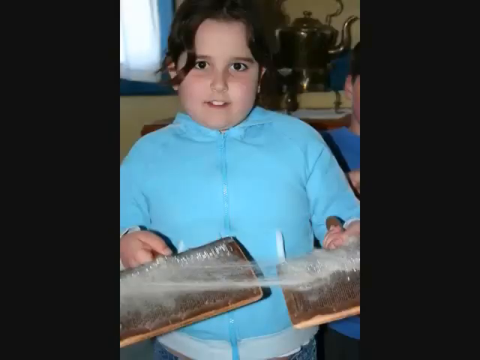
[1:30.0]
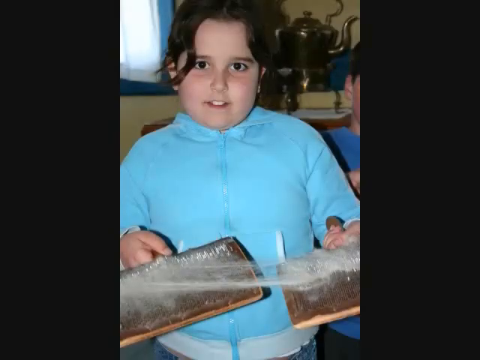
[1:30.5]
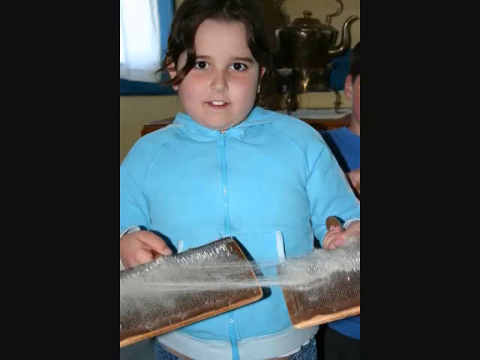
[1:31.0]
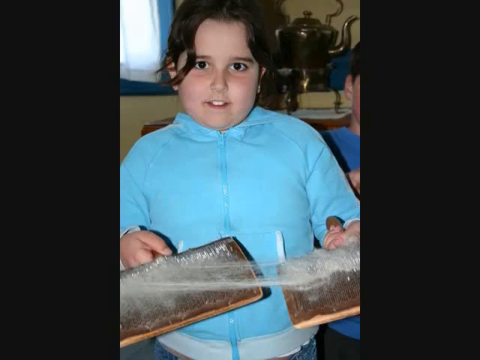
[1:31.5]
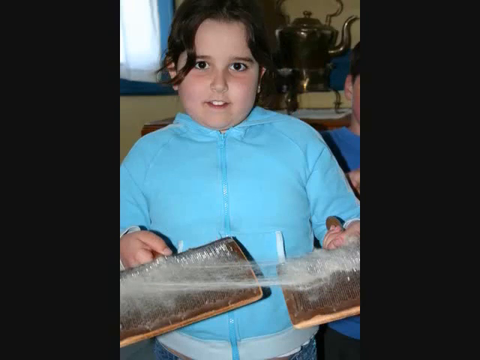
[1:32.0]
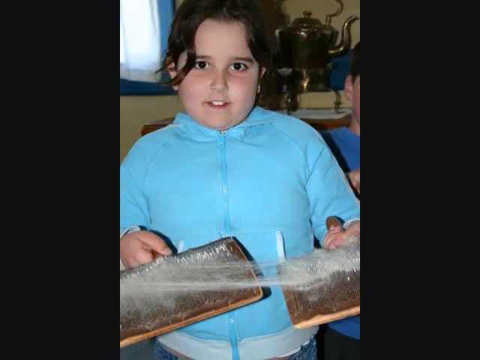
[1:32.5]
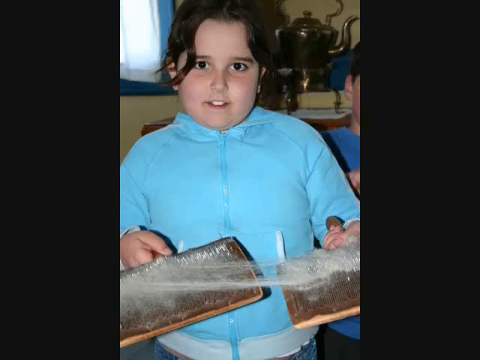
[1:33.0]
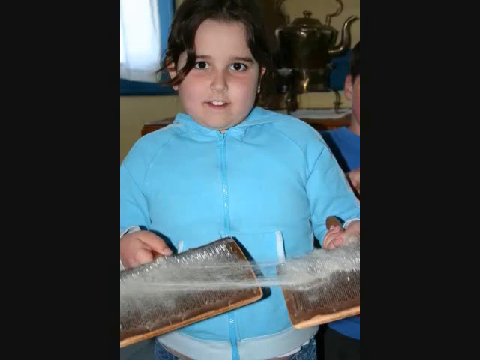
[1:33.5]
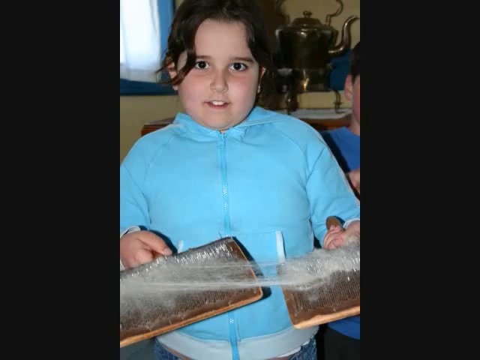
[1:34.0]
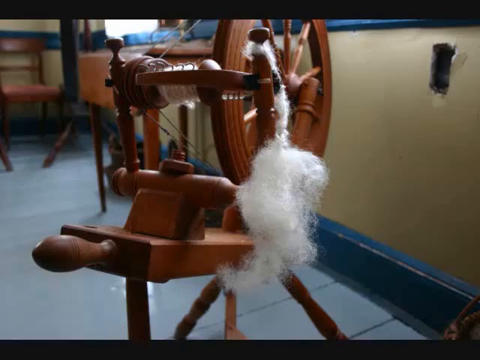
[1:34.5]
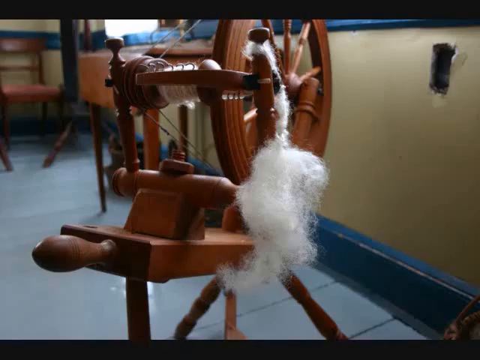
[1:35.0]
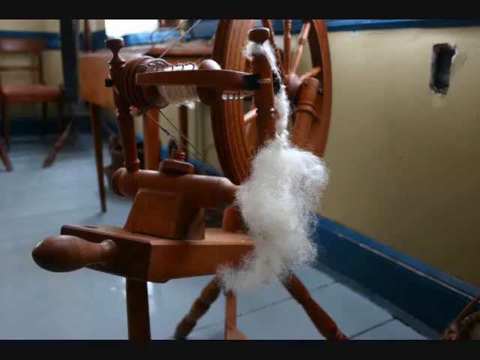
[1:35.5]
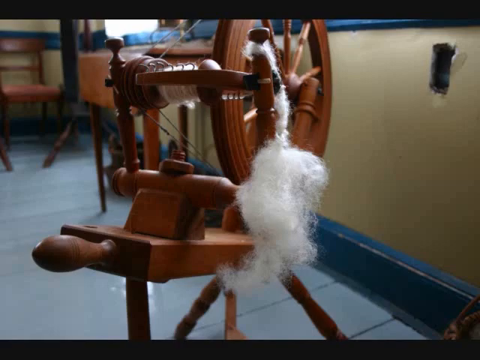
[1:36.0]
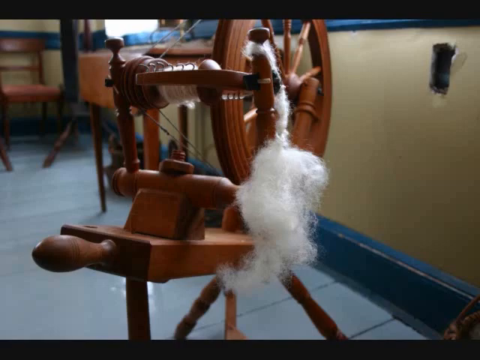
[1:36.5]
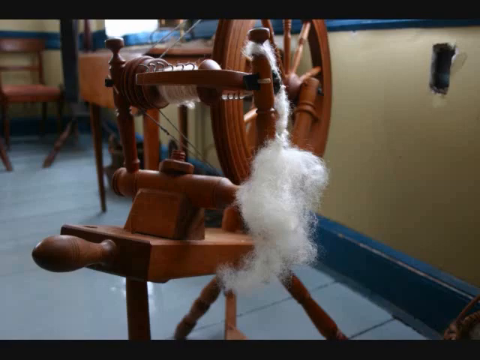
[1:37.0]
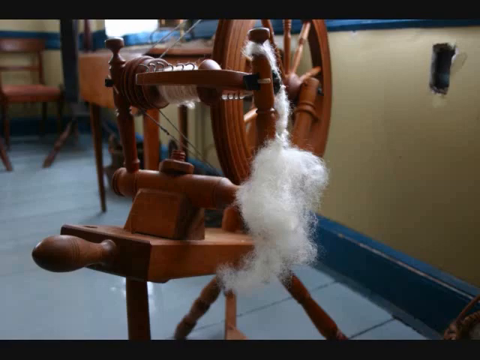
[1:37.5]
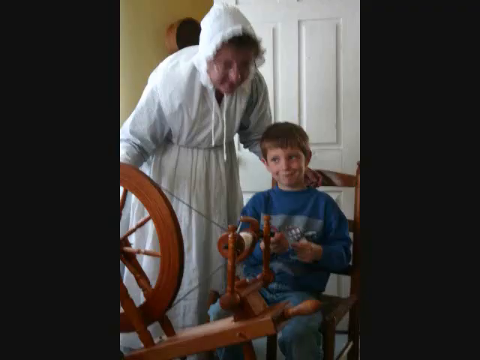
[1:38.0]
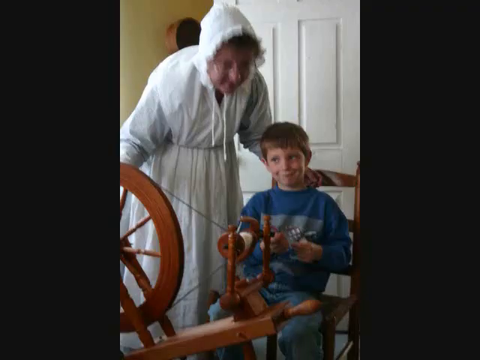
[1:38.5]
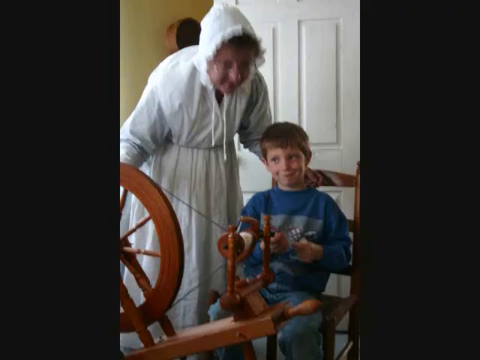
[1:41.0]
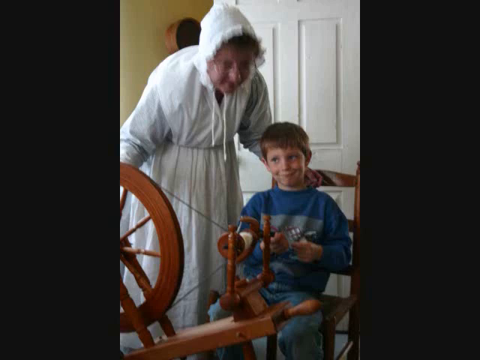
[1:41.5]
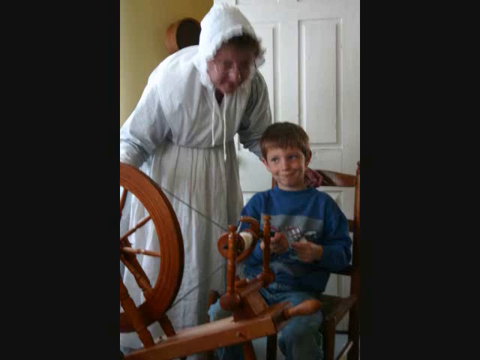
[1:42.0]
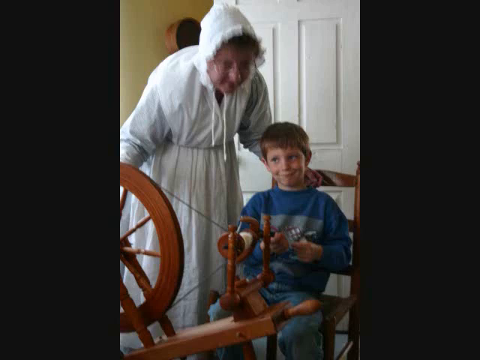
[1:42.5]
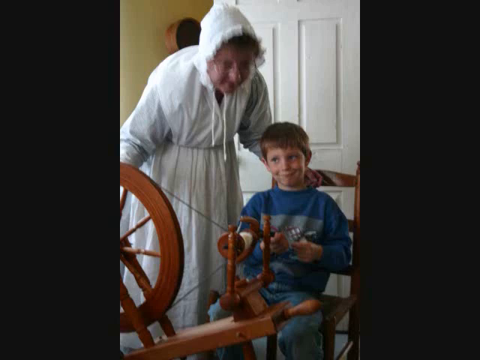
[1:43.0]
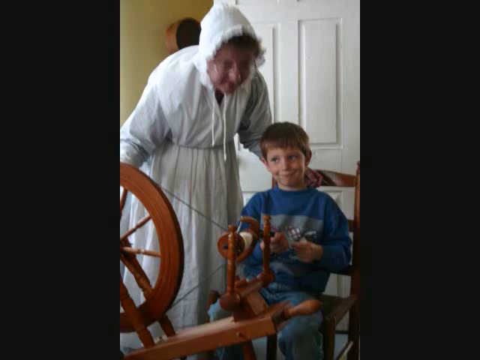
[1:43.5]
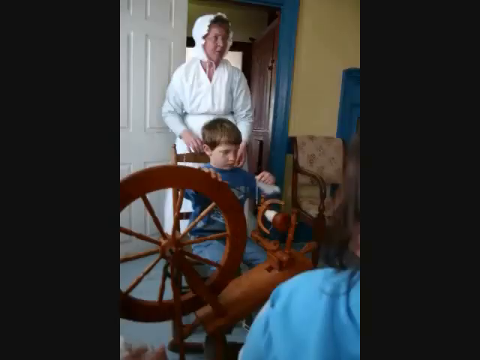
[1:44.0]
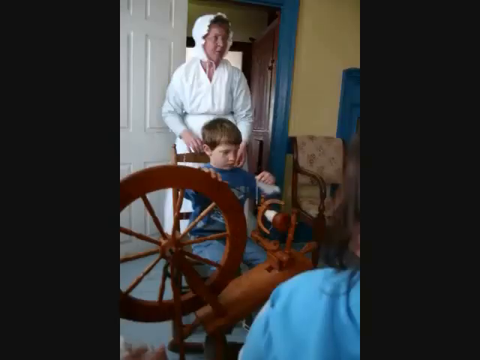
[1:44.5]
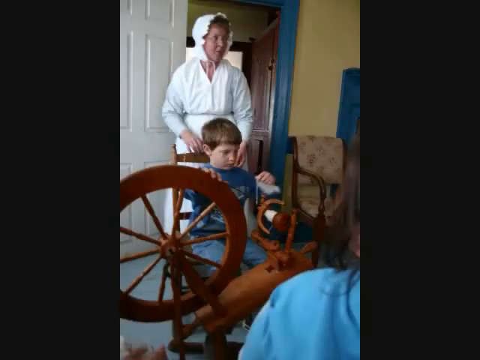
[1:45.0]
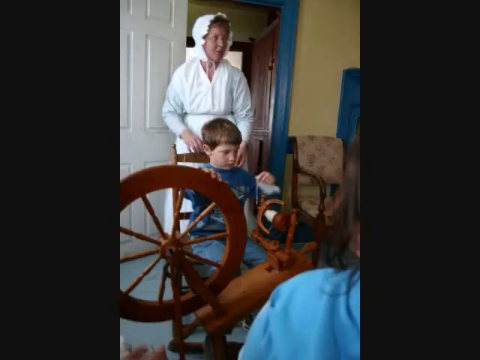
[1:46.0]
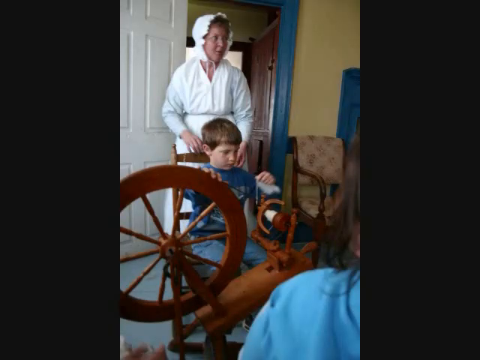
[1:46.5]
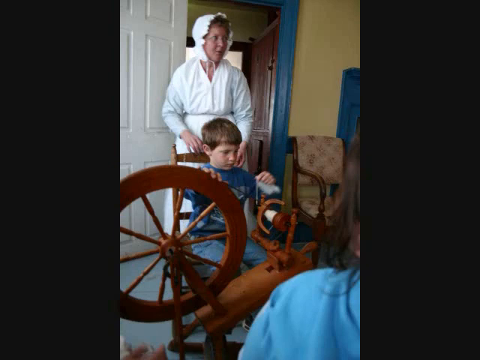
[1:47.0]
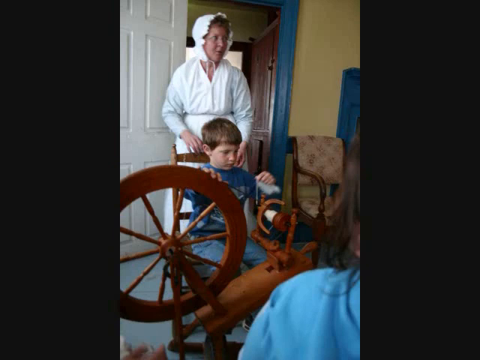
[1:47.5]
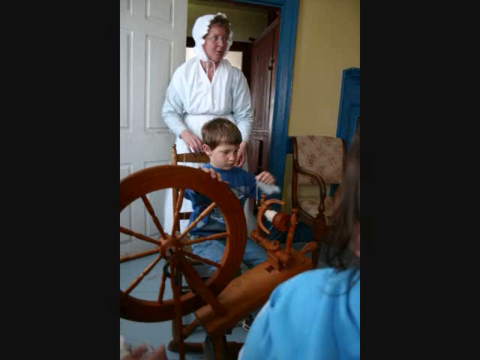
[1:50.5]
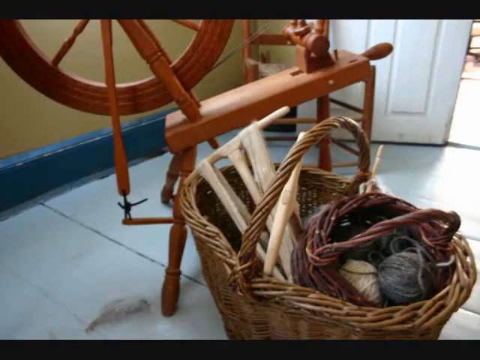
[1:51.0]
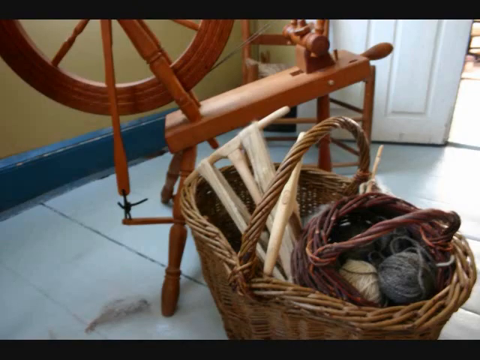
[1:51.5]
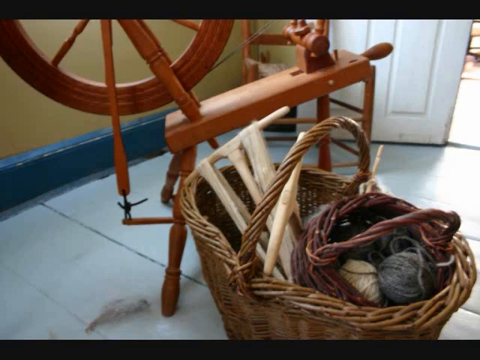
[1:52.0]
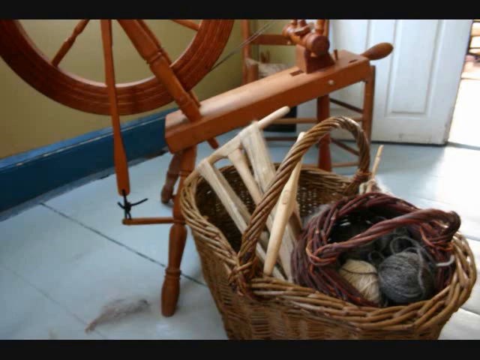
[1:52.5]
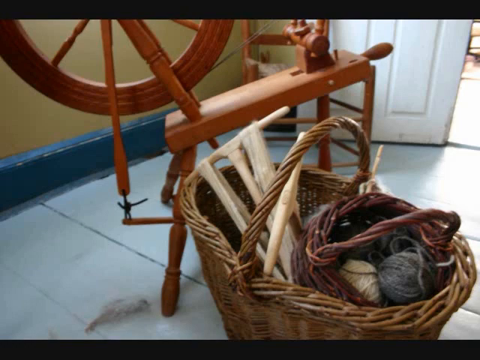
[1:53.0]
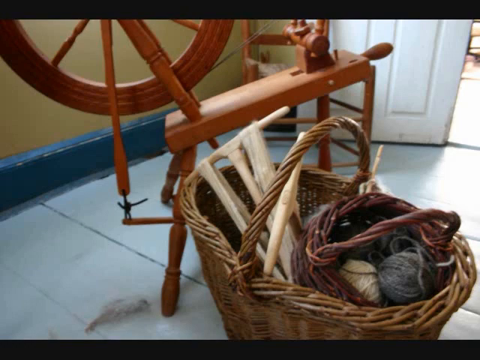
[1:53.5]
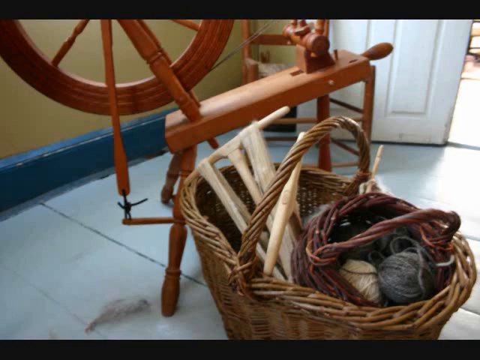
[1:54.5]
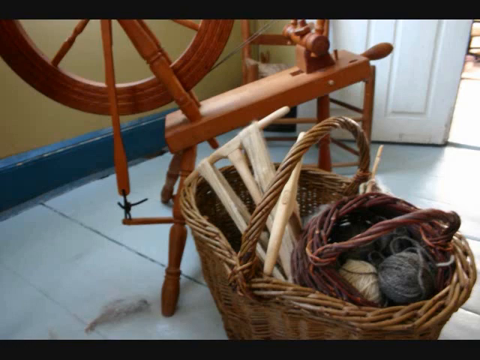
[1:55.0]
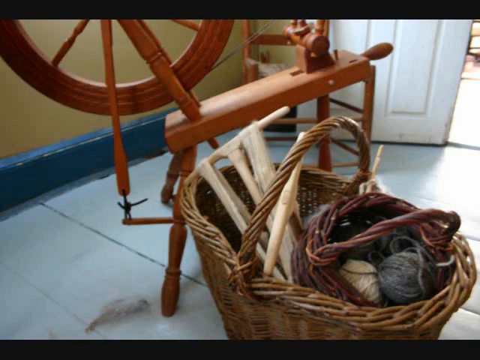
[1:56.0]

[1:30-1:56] A young child, probably eight years old, with dark hair, black eyes and a jacket, whose gender is unclear, is holding two brushes with some wool on them. The brushes are rectangular and flat with bristled edges. Next comes a spinning machine for turning raw wool into yarn, which appears to be old. Then a woman appears in a traditional apron and attire from the 18th century. A little boy making a funny face is right in front of the spinning machine.